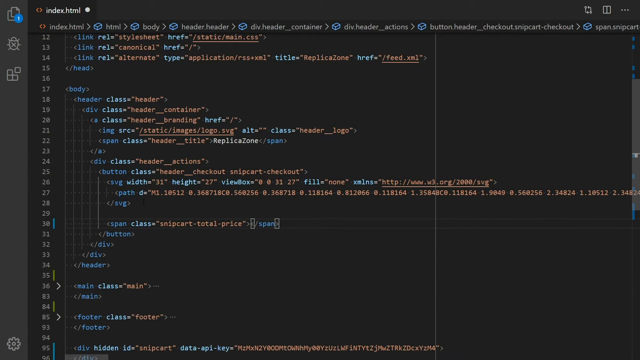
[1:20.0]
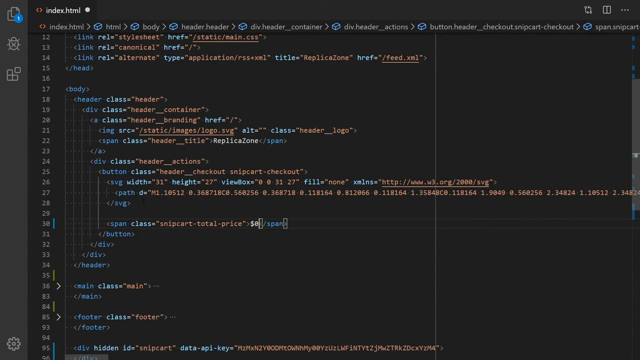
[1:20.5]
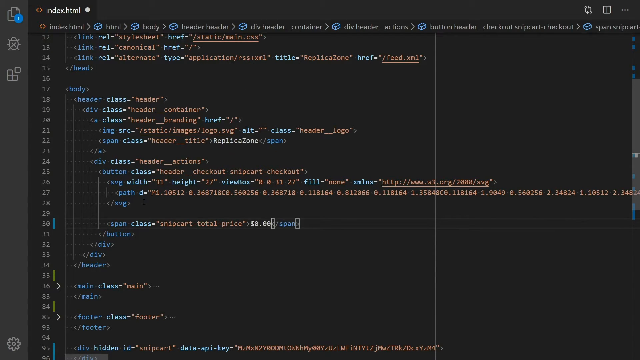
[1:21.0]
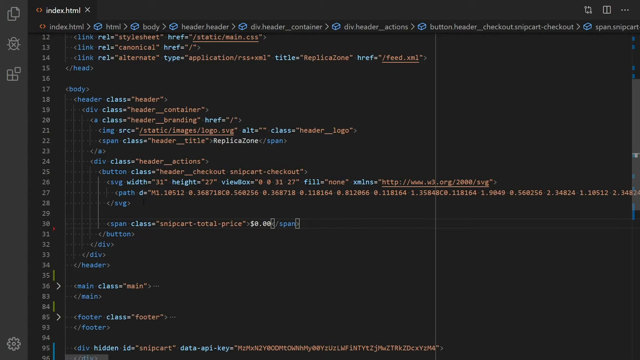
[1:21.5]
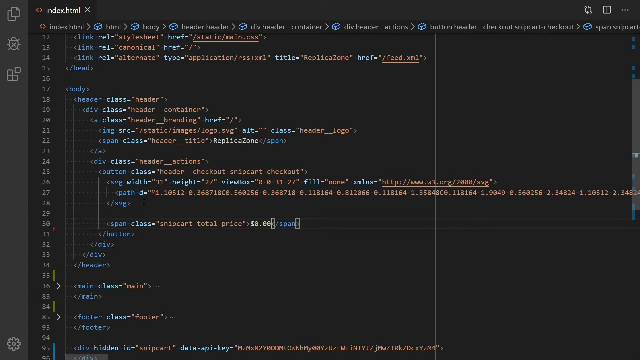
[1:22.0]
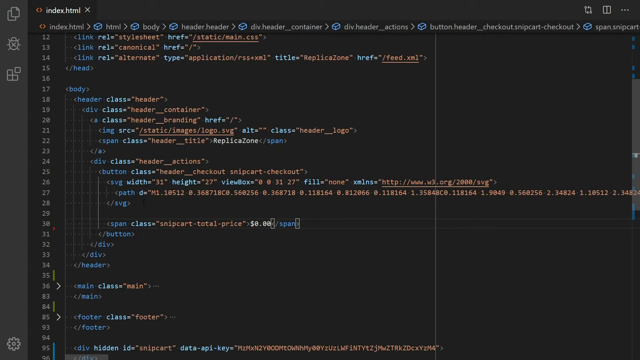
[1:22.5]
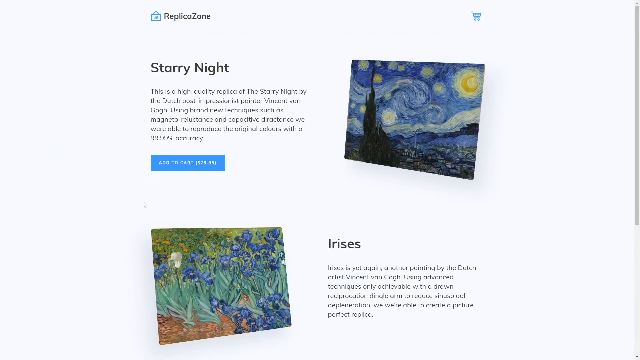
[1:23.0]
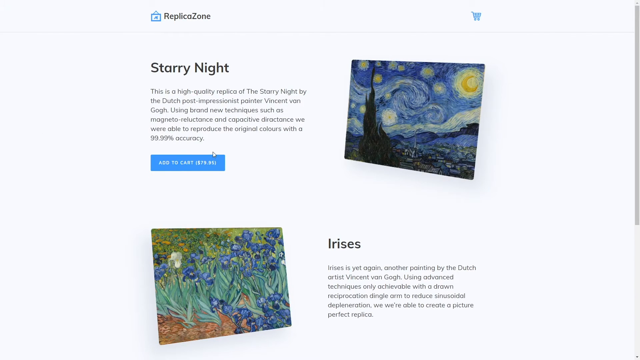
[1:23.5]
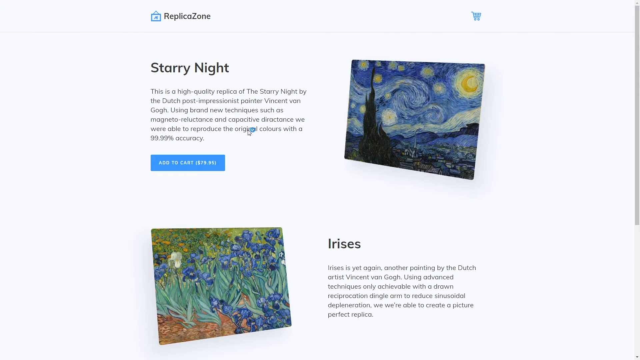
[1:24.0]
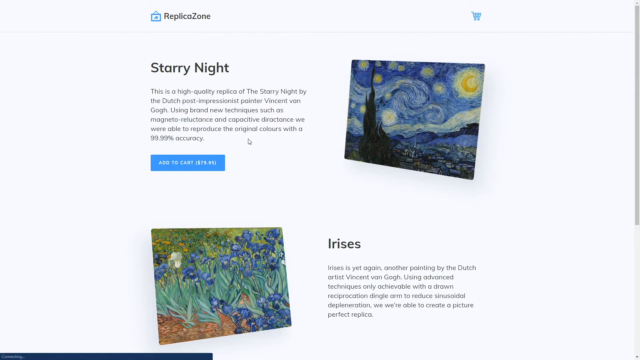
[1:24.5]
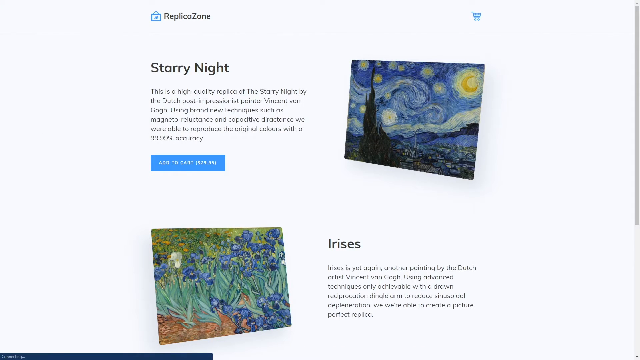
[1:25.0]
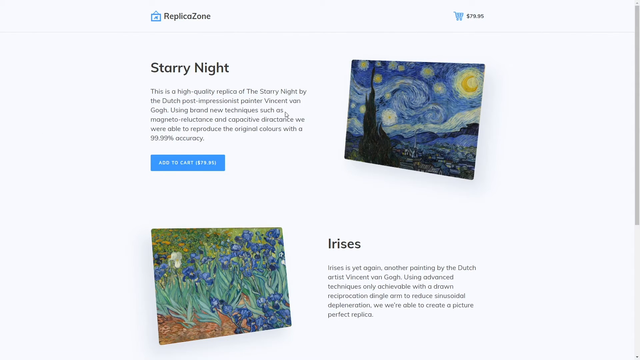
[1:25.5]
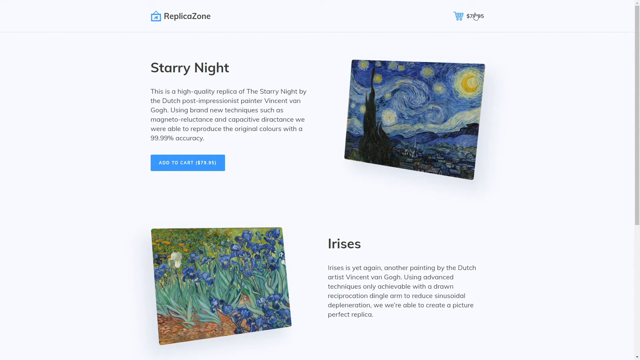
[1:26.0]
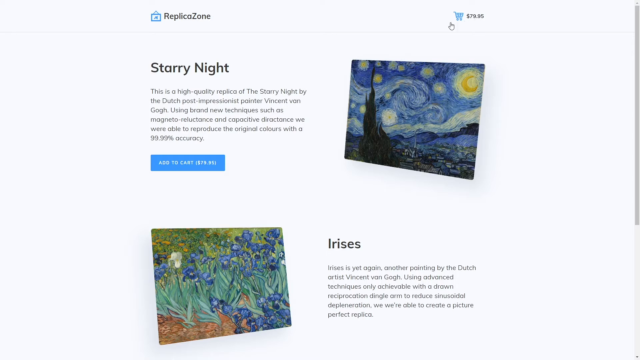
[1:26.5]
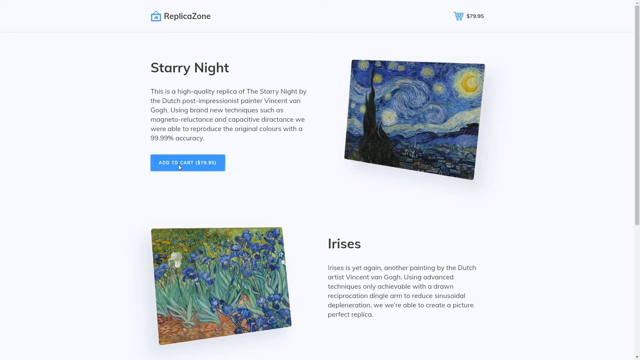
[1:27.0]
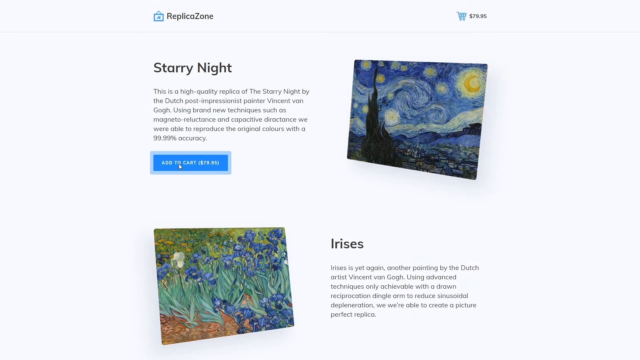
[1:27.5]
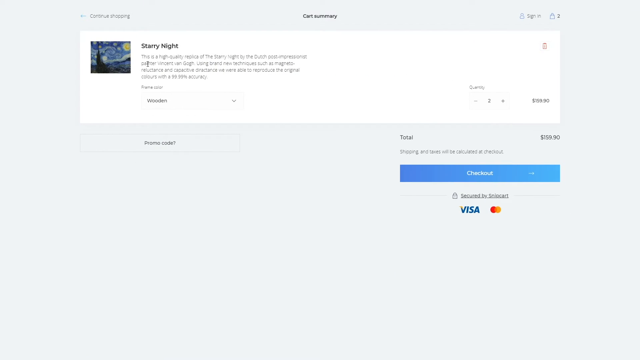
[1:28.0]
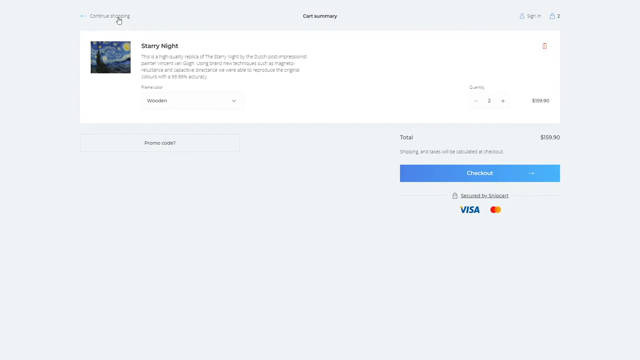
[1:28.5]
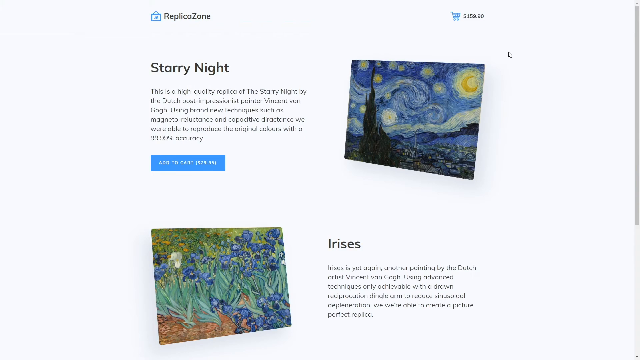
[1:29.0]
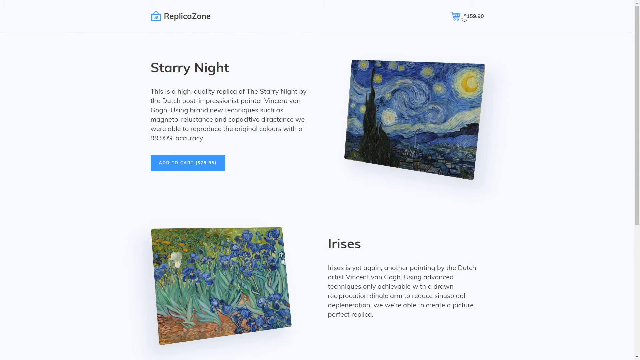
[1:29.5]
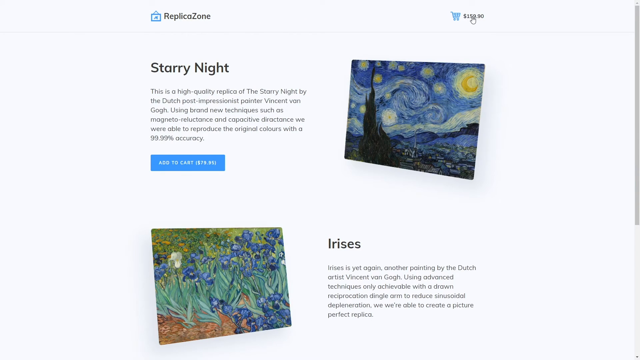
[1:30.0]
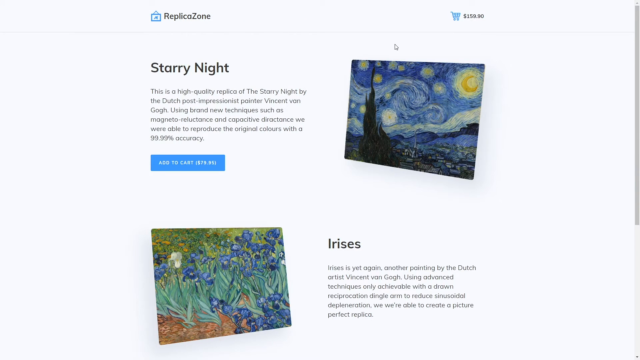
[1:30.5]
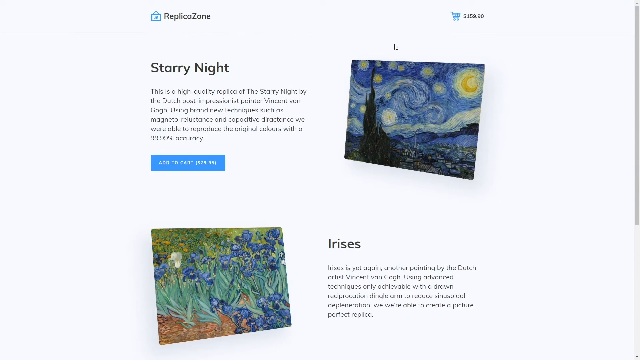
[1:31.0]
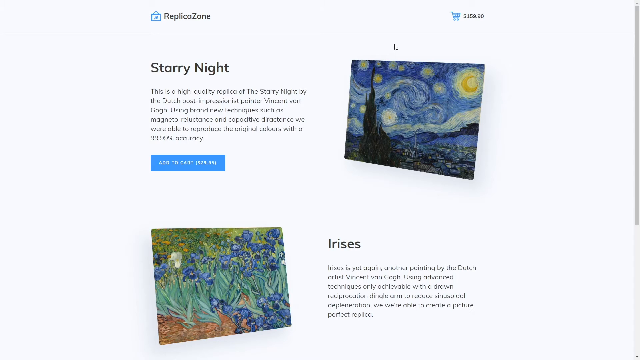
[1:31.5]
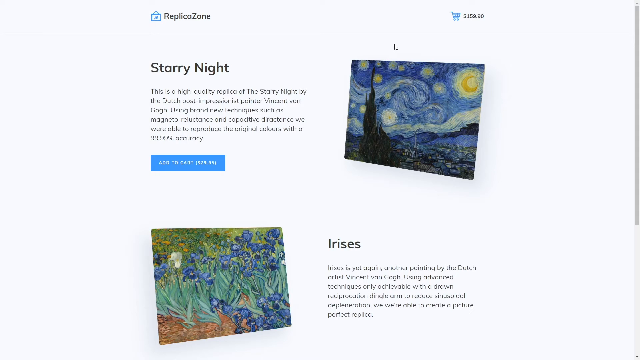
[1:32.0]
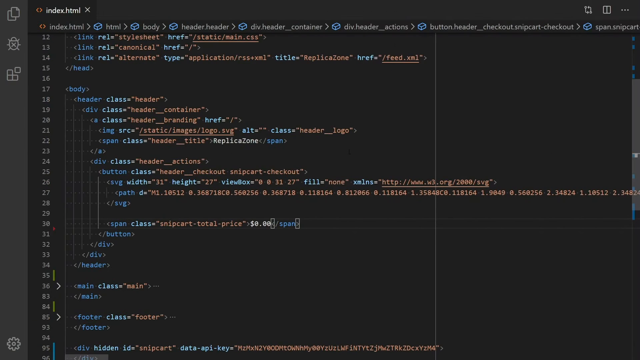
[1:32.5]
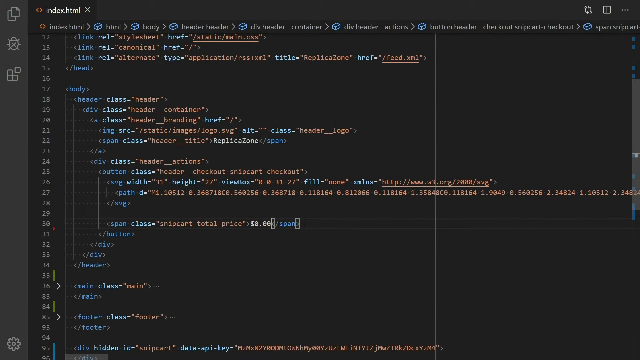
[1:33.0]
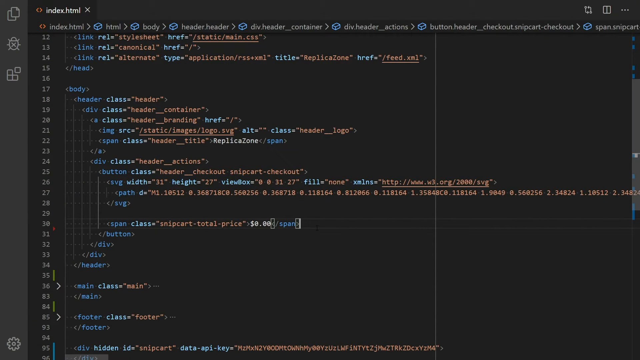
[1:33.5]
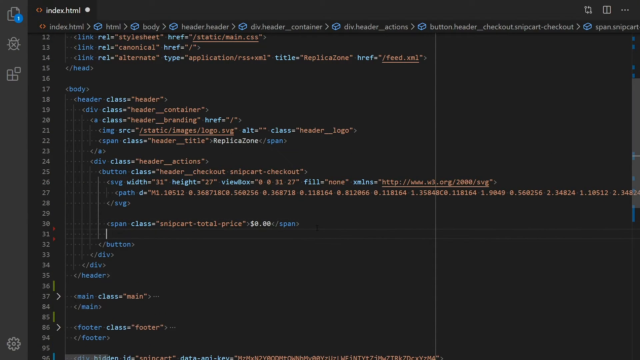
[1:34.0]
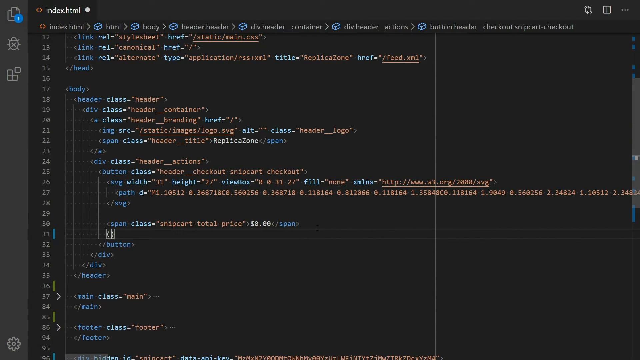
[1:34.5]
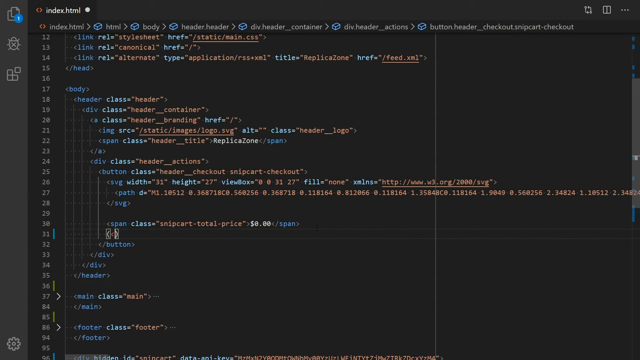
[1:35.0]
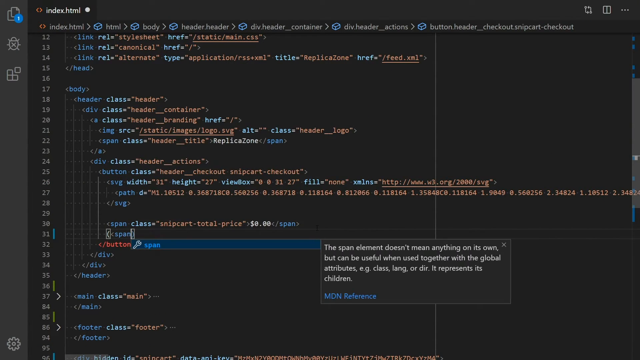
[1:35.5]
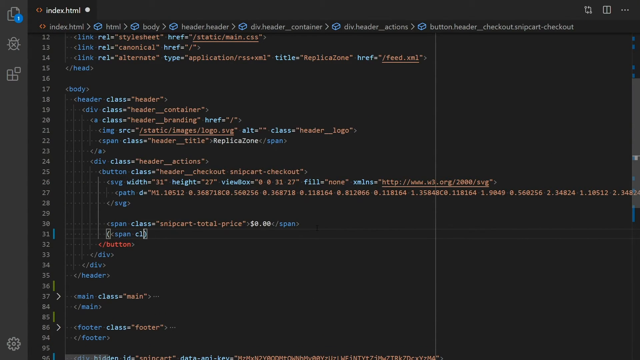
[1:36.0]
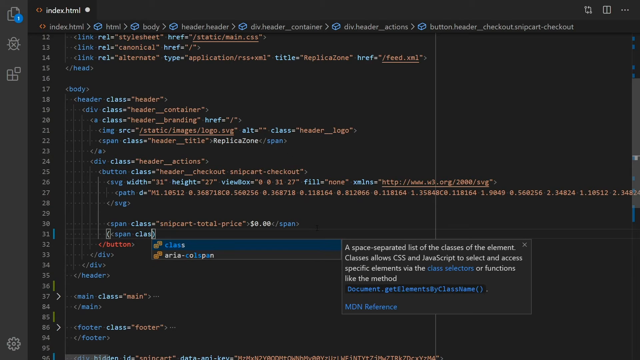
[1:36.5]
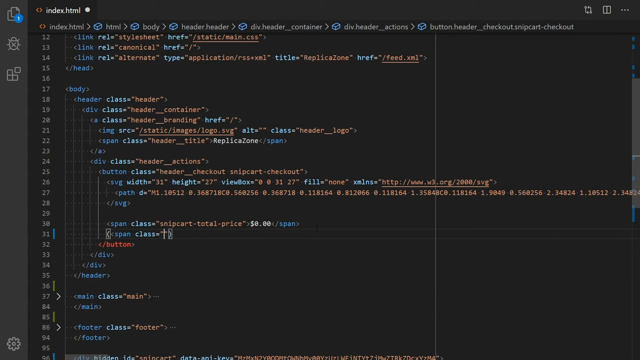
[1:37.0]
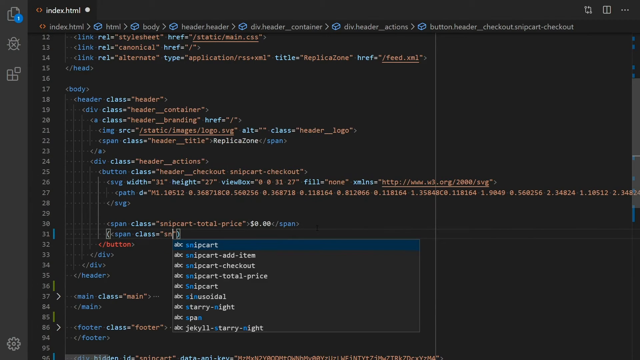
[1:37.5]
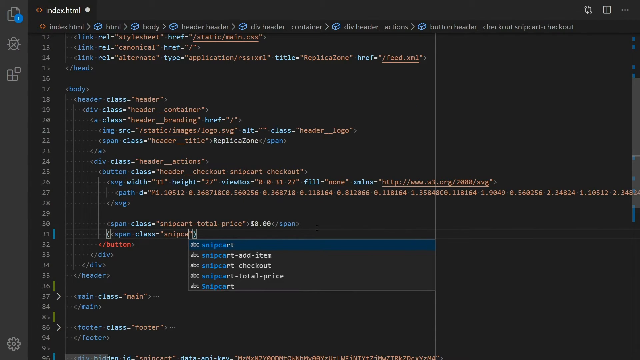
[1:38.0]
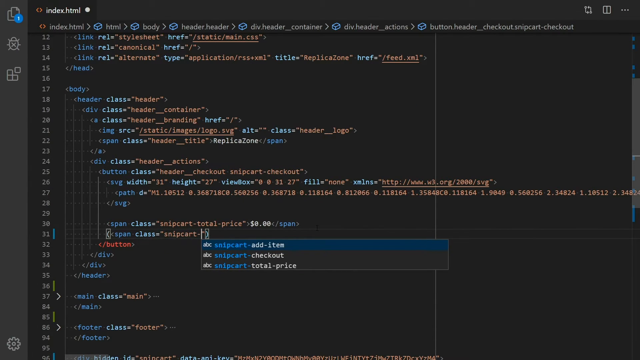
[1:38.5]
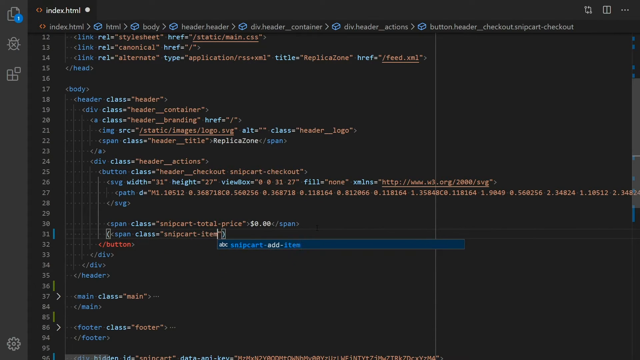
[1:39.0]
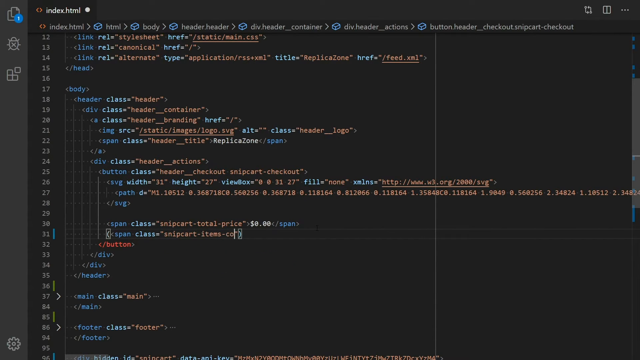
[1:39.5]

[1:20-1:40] The black code page shows that more code has been typed in. The view goes immediately back to the shopping page with the two paintings, where the cursor is still a hand; it clicks the little blue shopping cart in the upper right, the cart page appears, and the view comes back from there to the black code page, where the code has been typed in. The cursor moves through various points, going from the paintings page to the shopping cart page and back to the black code page. The code is typed in different colors: green, red, a lighter red and blue, with all highlights in a lighter blue that stands out from the background. The video is a tutorial showing how to make changes to this website by inputting different code. The hand cursor switches between the sales page with the paintings and the cart page, which shows the cost of the painting and how much has been added to the cart. At the very end, the view returns to the black code page where code is being typed in.